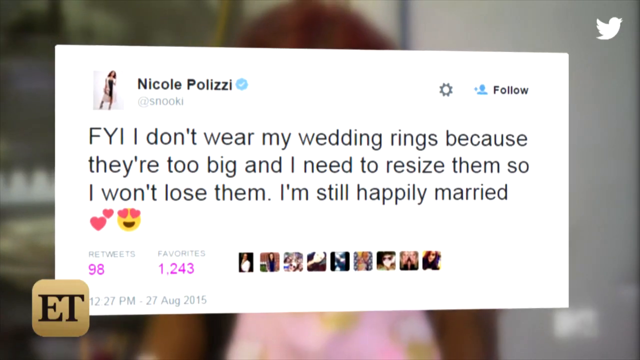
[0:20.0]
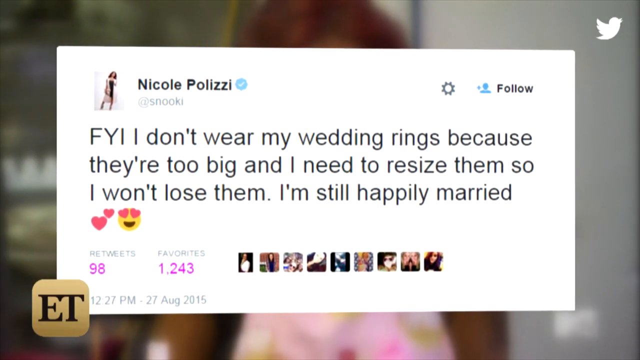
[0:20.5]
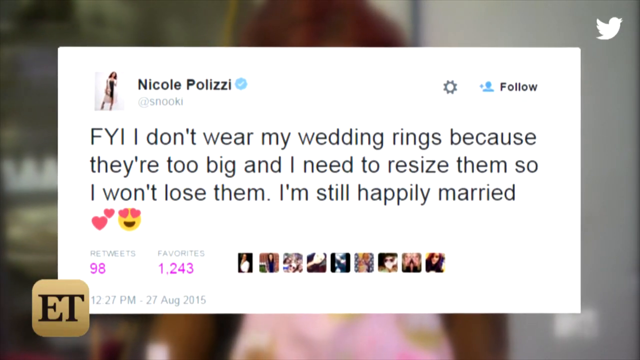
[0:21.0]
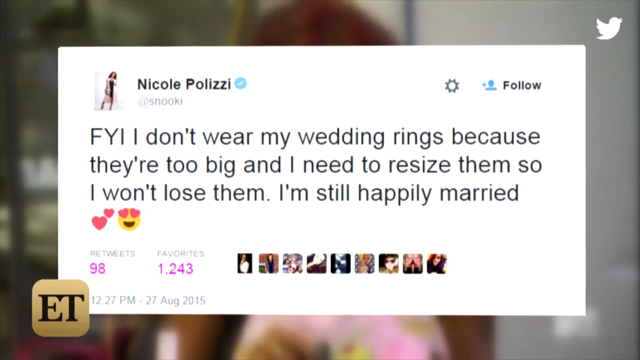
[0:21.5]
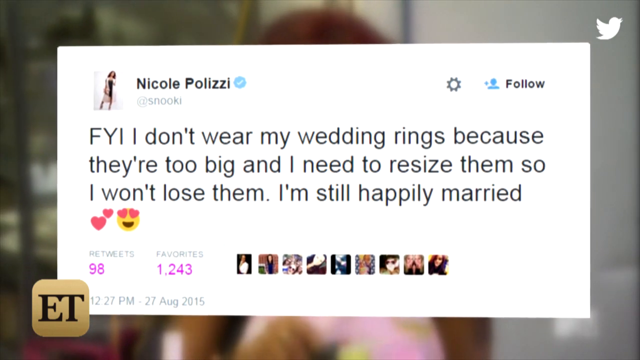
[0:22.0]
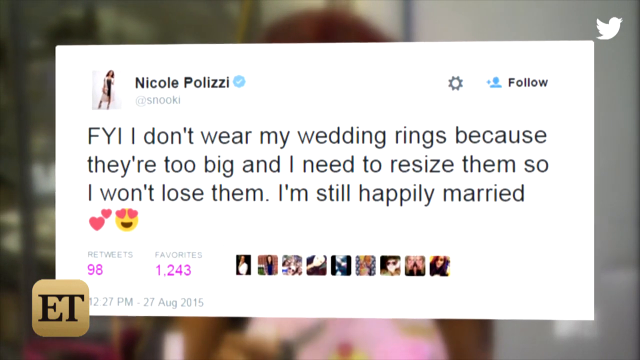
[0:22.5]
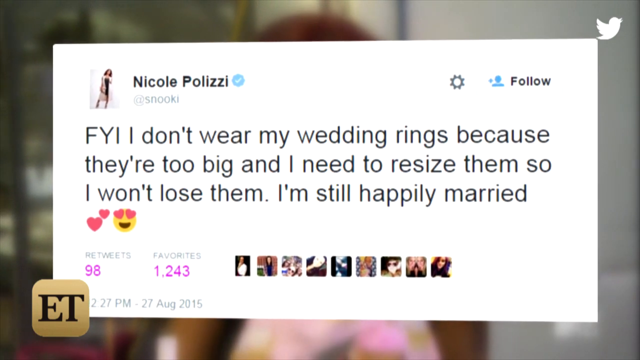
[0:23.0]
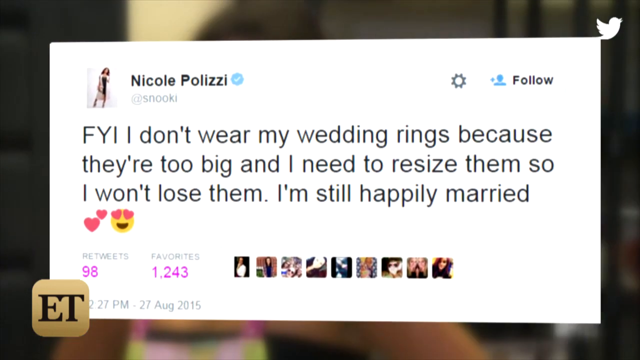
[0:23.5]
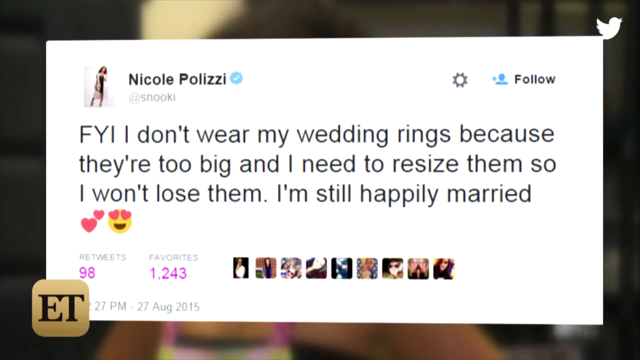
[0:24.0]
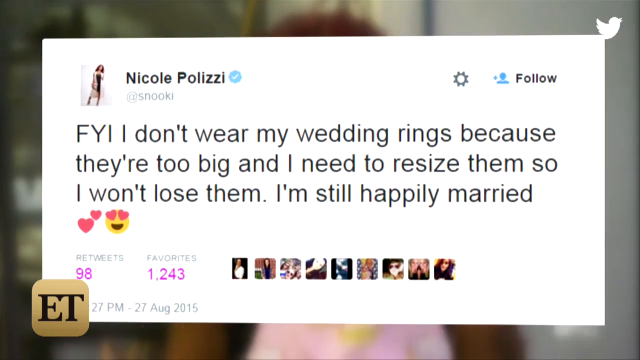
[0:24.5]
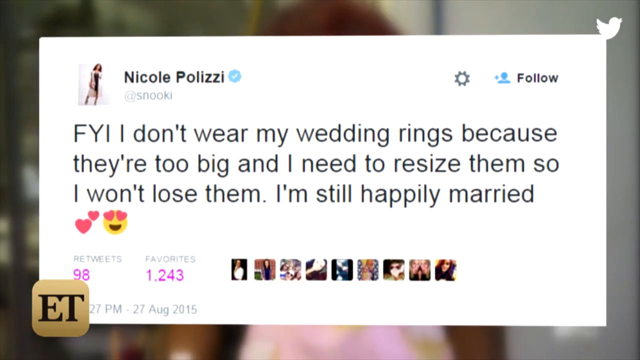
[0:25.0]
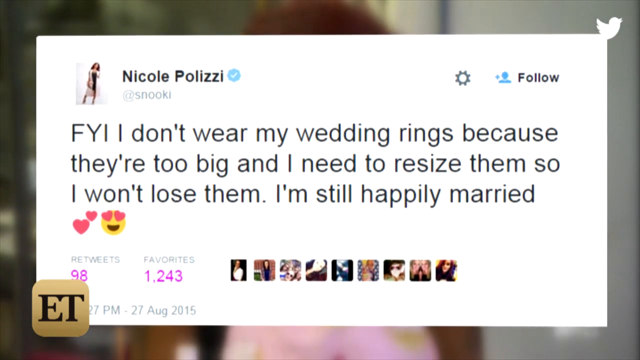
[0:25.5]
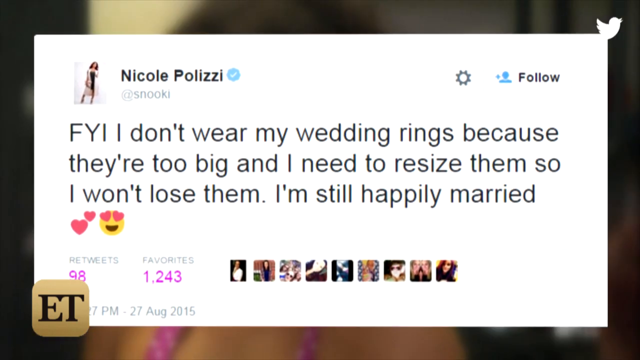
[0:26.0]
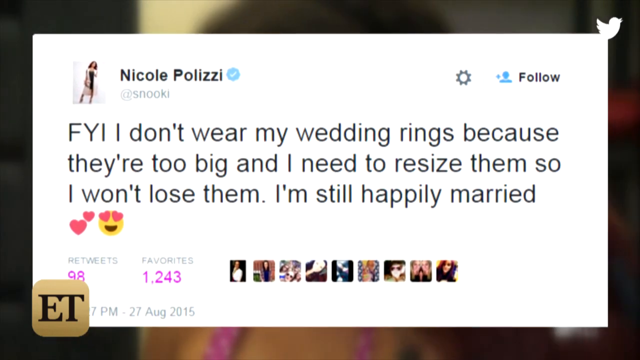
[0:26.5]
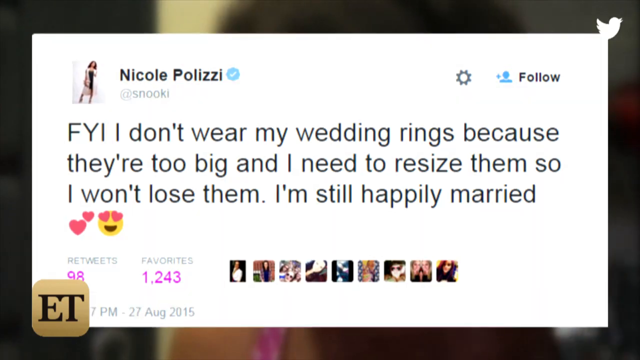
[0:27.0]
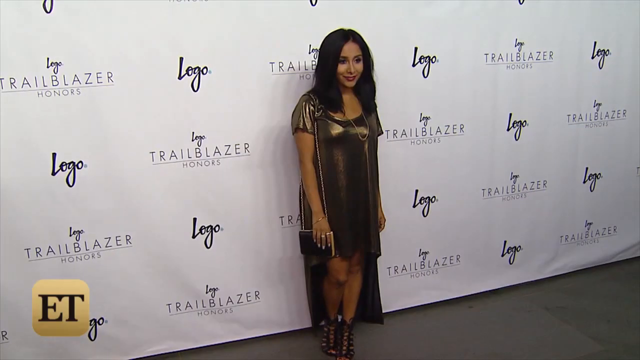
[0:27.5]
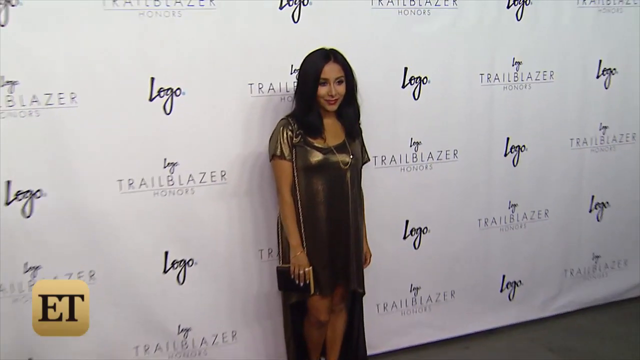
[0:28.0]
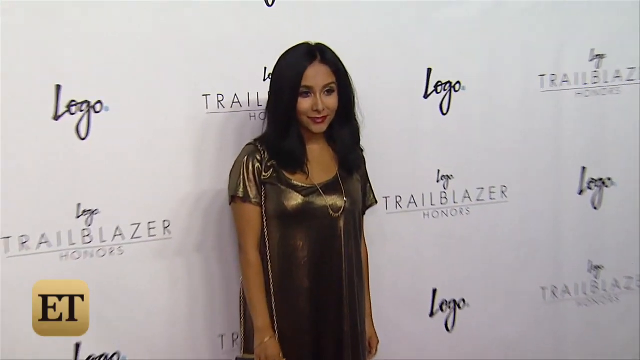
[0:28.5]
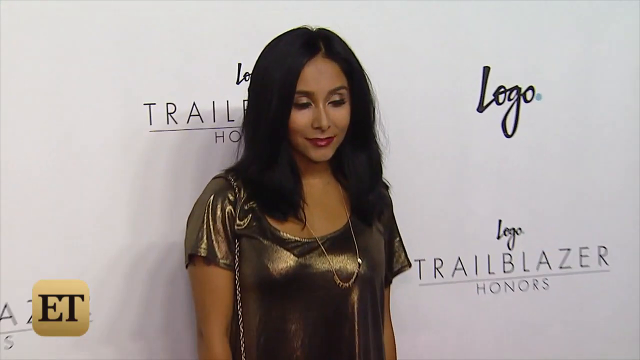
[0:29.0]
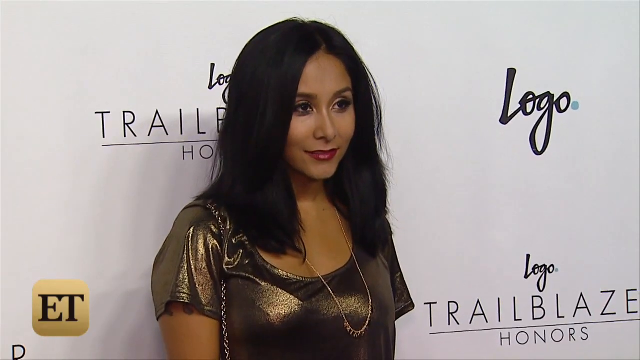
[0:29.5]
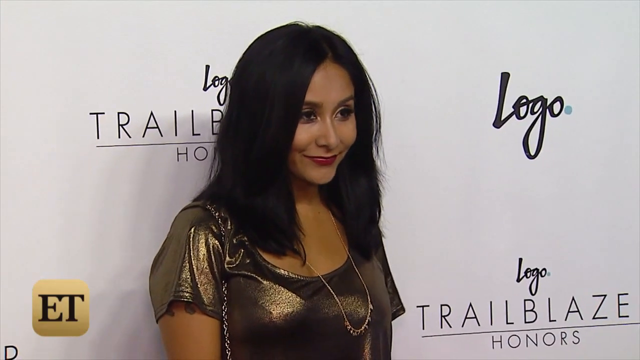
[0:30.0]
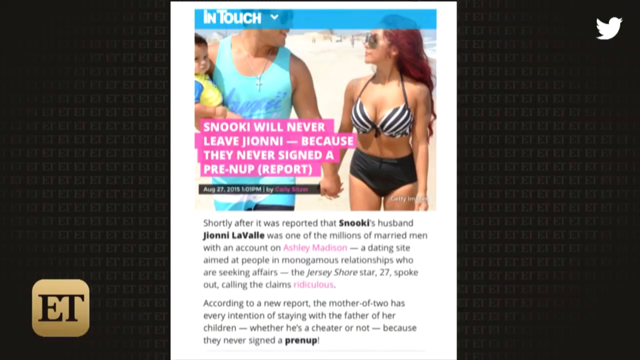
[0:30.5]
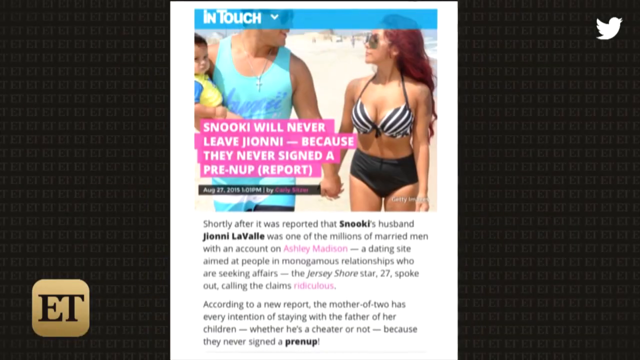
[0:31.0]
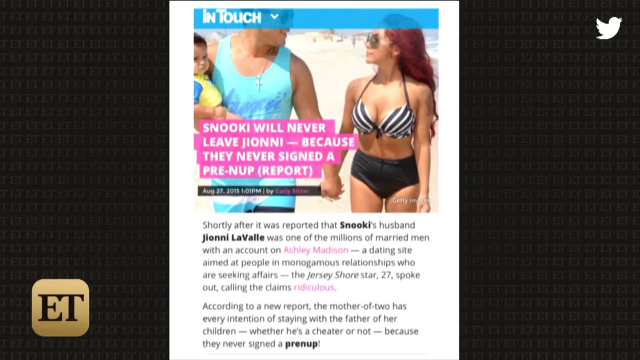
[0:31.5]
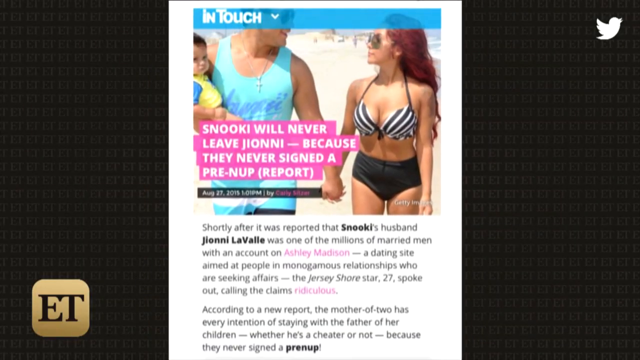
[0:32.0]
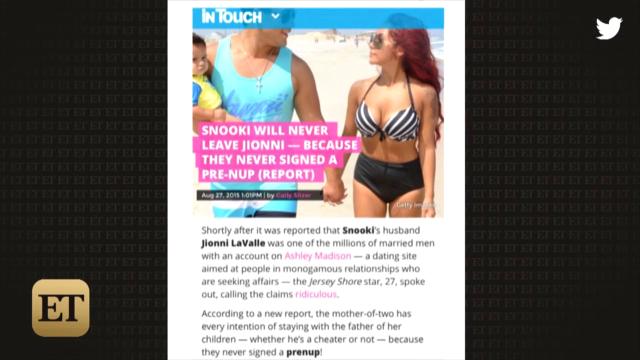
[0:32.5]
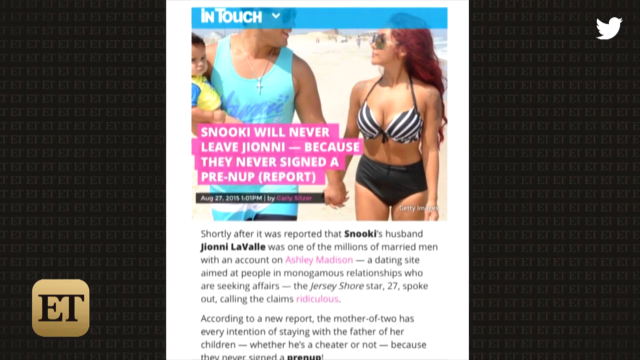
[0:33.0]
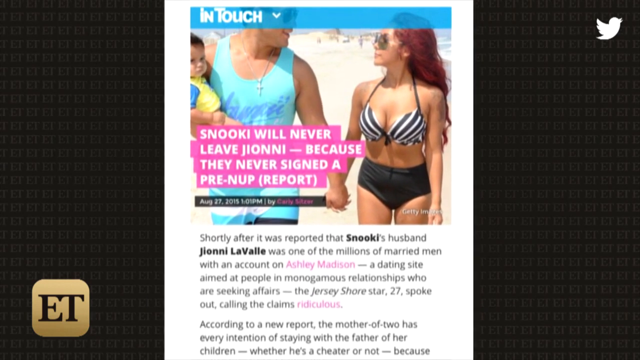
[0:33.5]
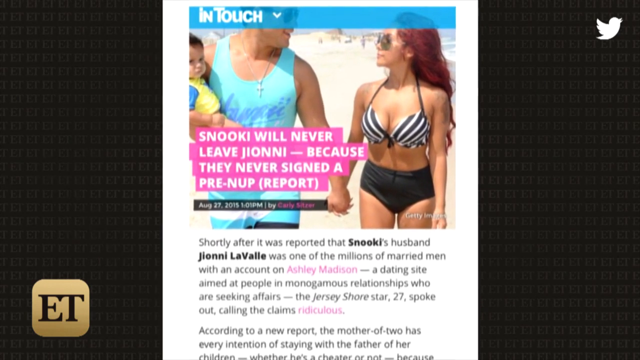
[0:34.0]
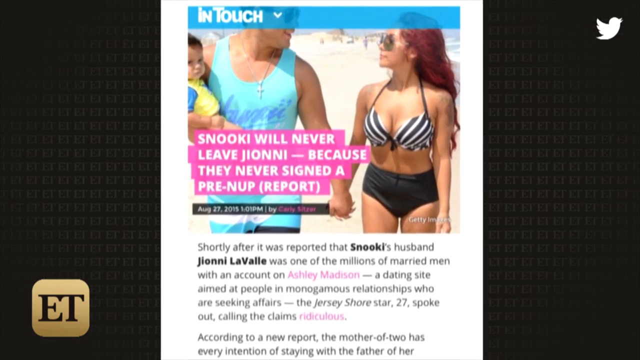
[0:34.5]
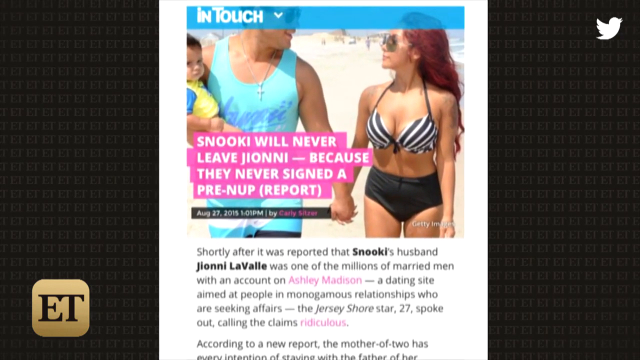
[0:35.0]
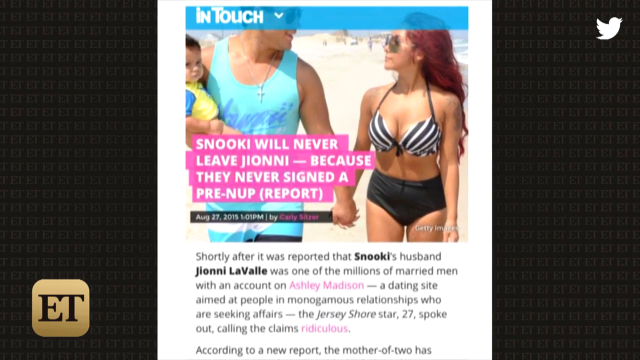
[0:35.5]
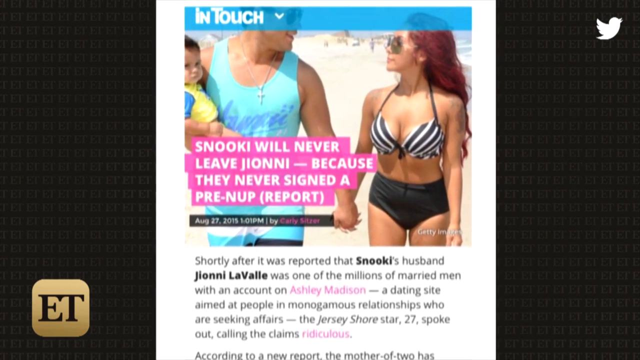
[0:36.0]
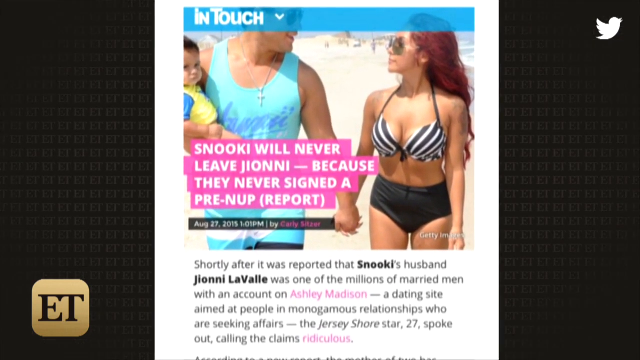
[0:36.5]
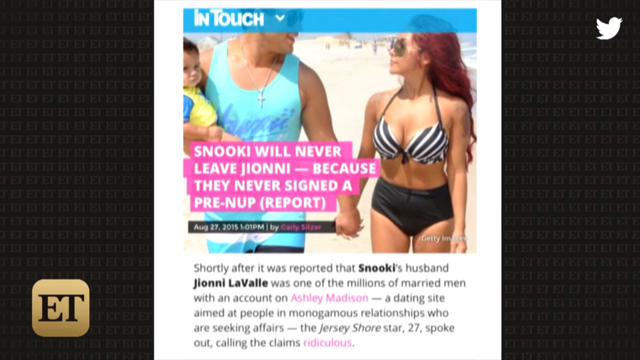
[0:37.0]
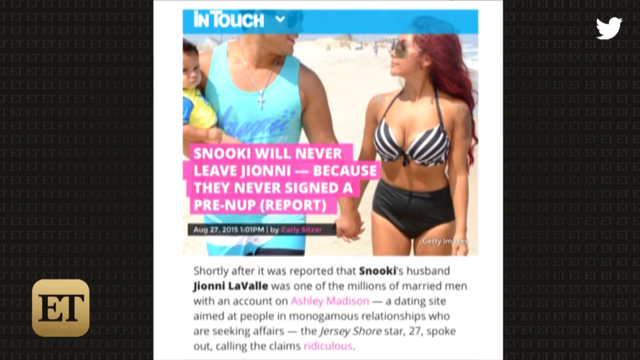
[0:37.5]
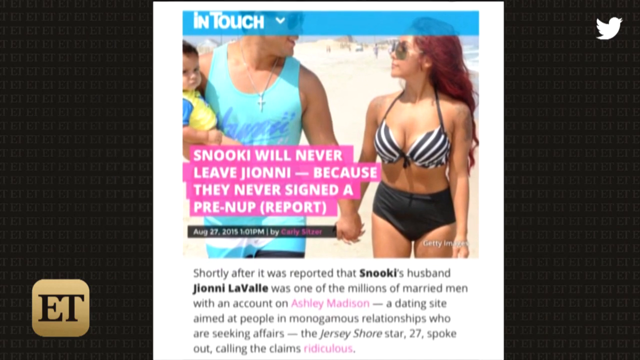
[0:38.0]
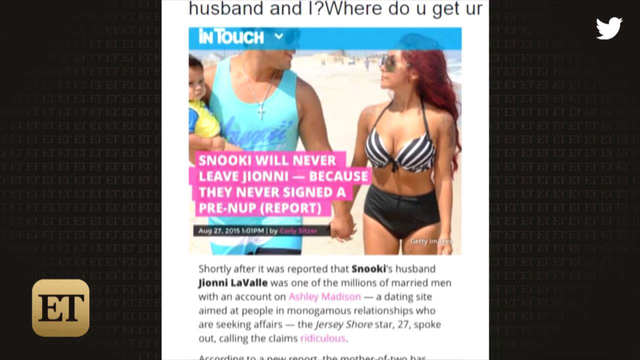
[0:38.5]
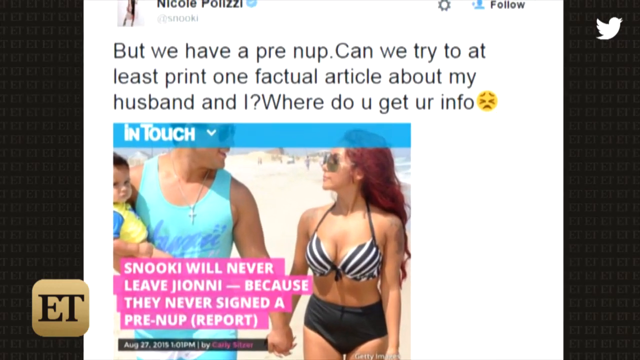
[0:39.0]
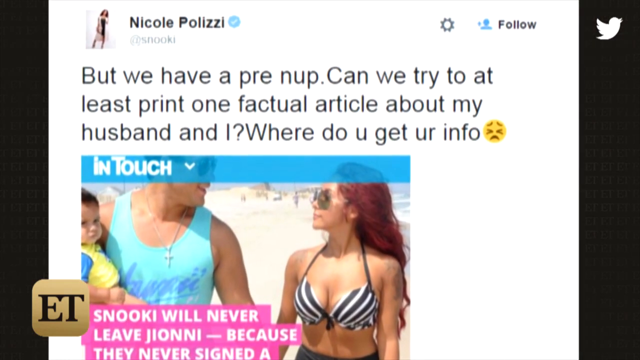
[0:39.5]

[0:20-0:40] A tweet identified as being from Nicole Polizzi states that she doesn't wear her wedding rings because they're too big but she's still happily married. A video plays in the background, but it can't really be seen because the tweet takes up the entire screen. The video cuts to a woman standing in front of a background having her picture taken. She holds a small purse in her right hand and wears a black and gold dress. The view zooms in on the woman as she smiles and looks at the cameras. This changes to an image of an article stating "Snooki will never leave Jionni - because they never signed a pre-nup (report)". Along with the article is a picture of a woman in a bikini and a man holding her hand while also holding a child. The view slowly zooms into that image before cutting to a tweet from Nicole Polizzi that states "But we have a pre nup. Can we try to at least print one factual article about my husband and I? Where do you get your info".